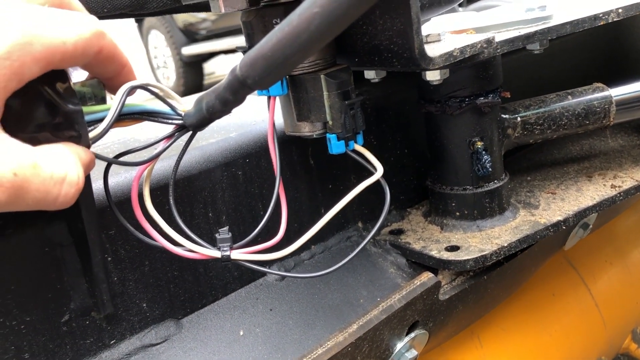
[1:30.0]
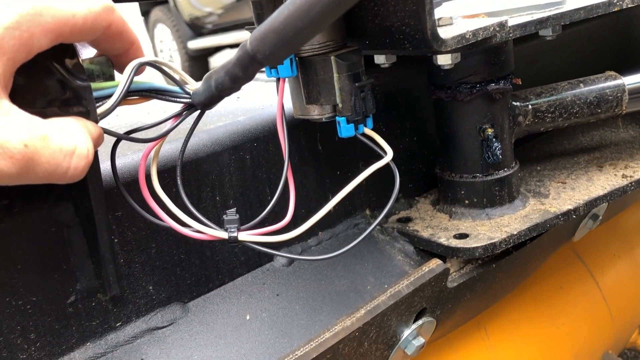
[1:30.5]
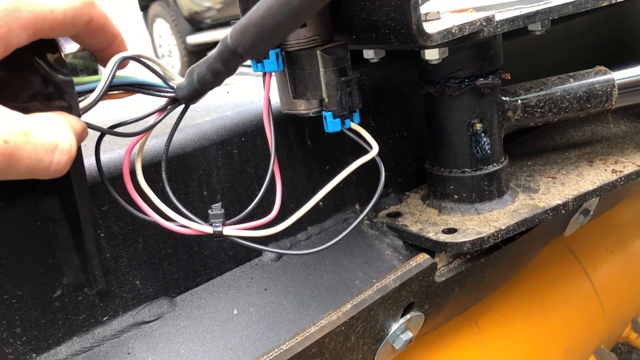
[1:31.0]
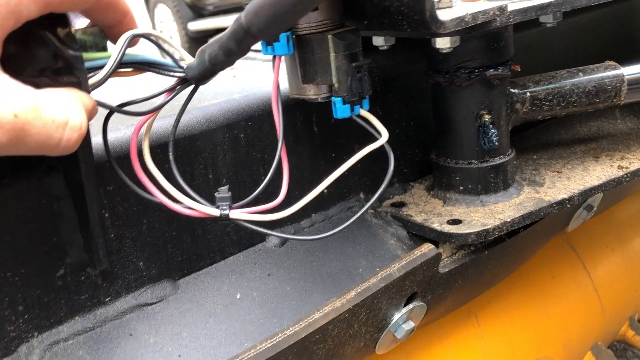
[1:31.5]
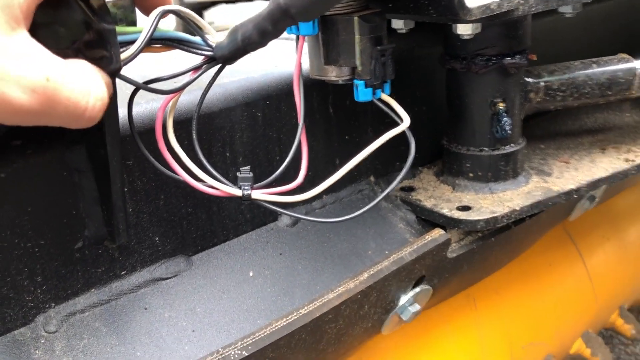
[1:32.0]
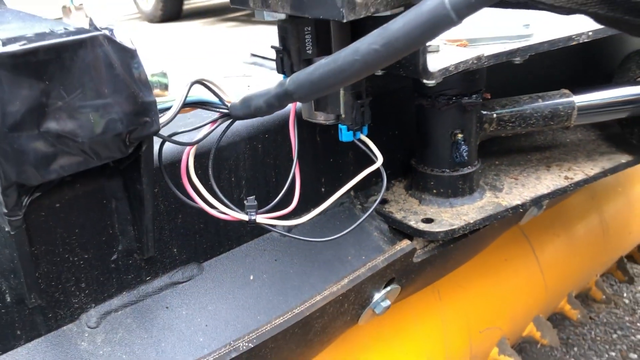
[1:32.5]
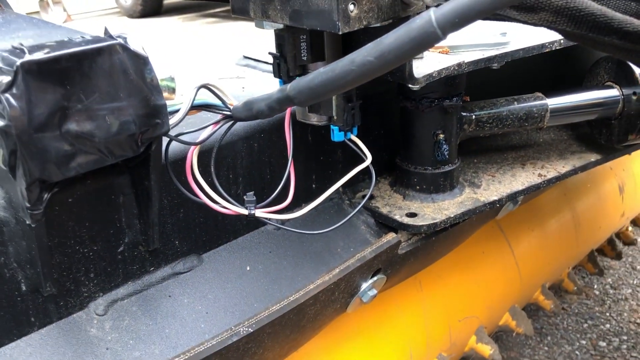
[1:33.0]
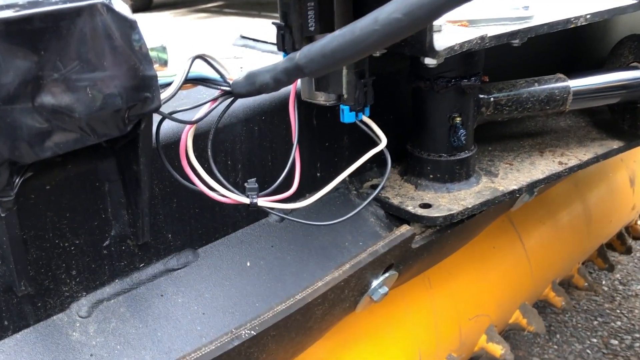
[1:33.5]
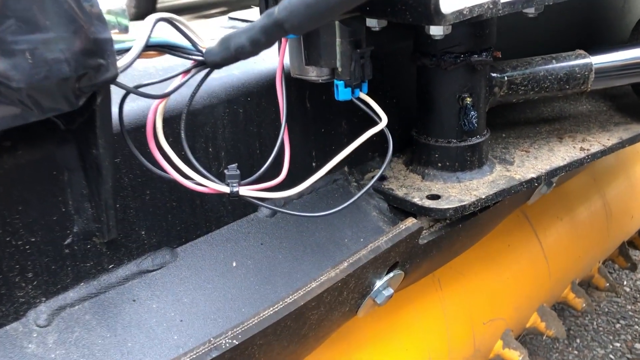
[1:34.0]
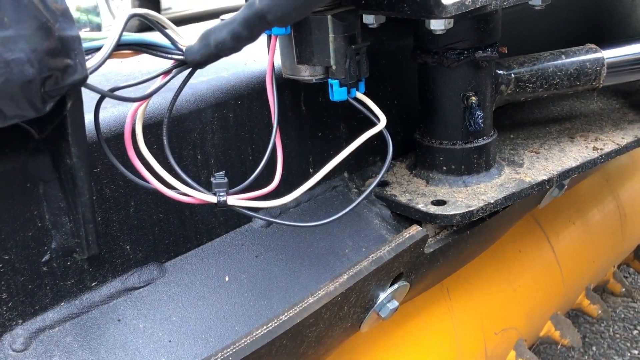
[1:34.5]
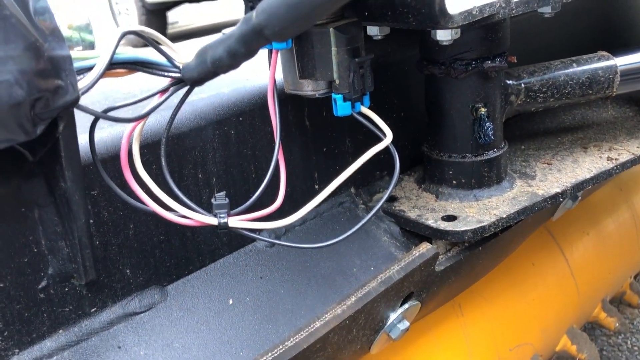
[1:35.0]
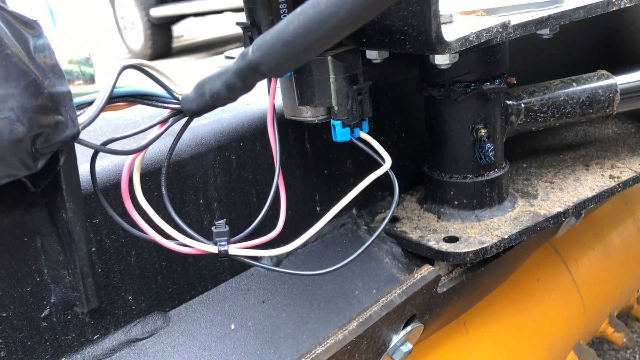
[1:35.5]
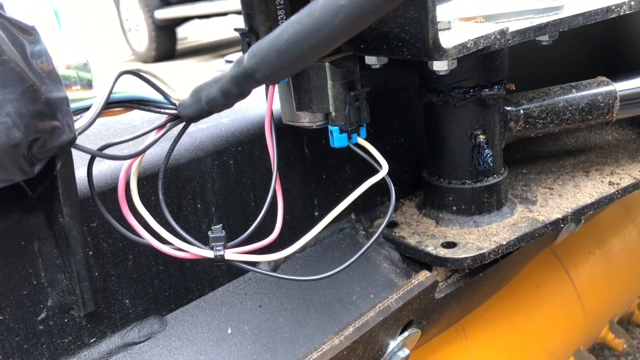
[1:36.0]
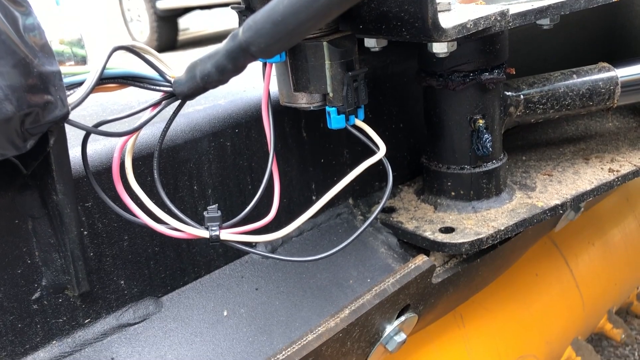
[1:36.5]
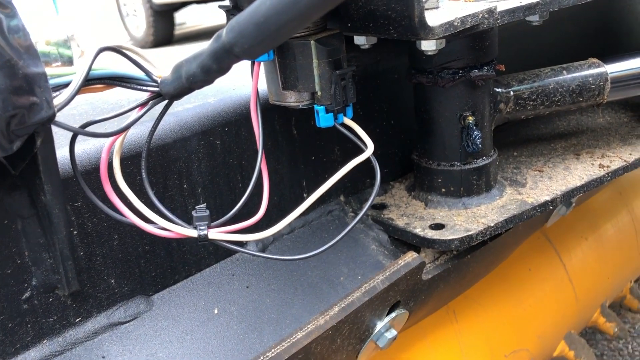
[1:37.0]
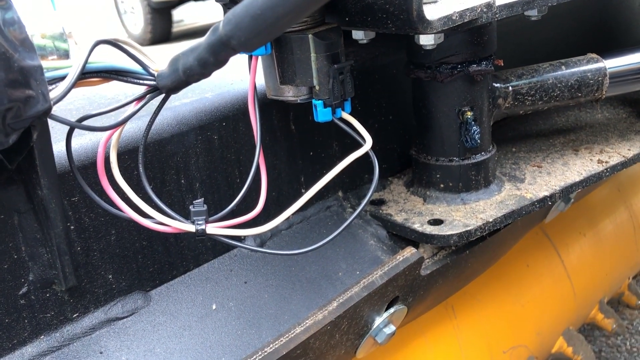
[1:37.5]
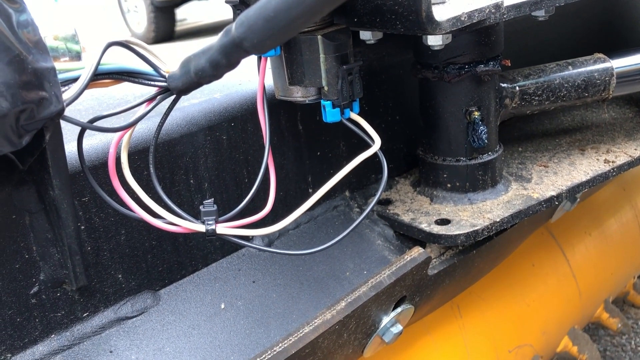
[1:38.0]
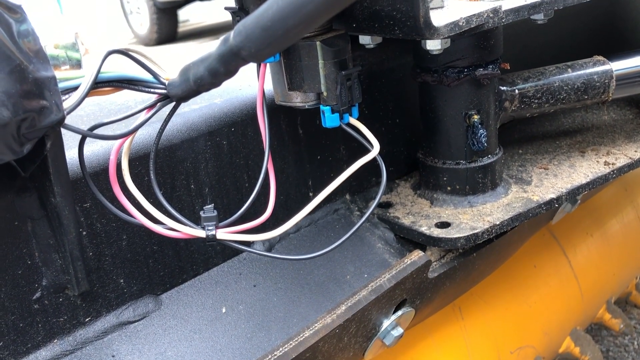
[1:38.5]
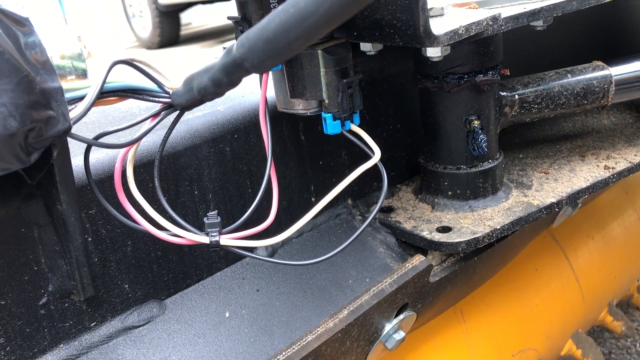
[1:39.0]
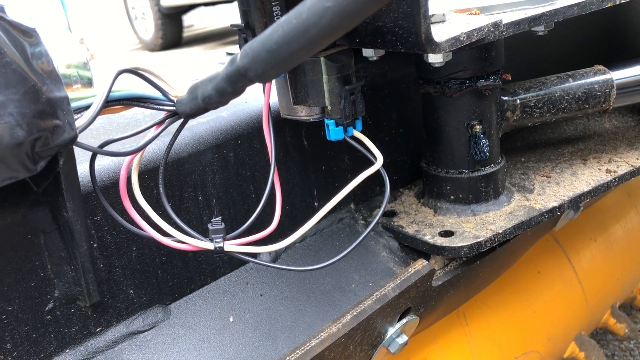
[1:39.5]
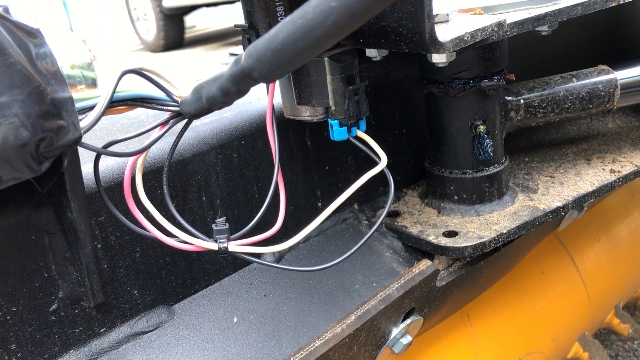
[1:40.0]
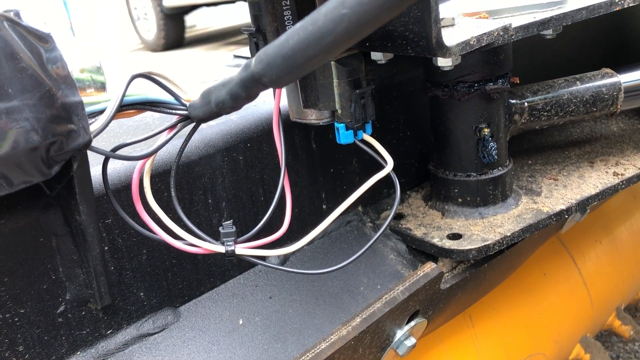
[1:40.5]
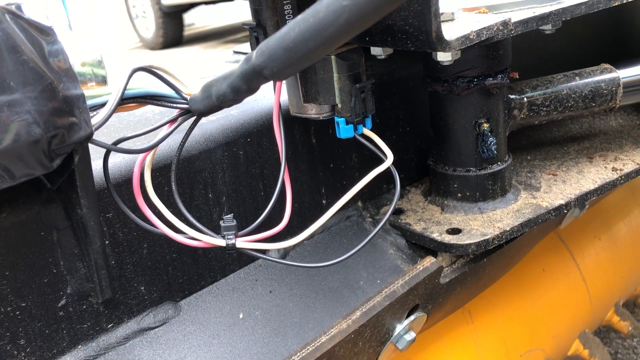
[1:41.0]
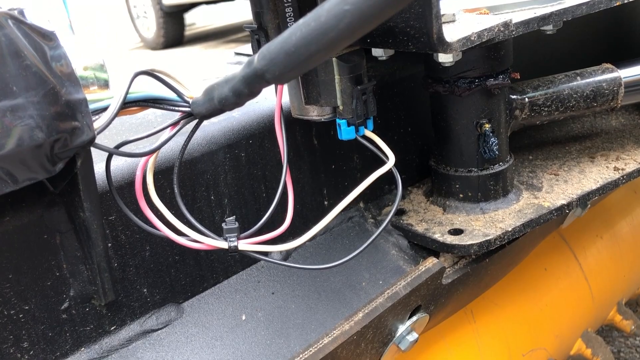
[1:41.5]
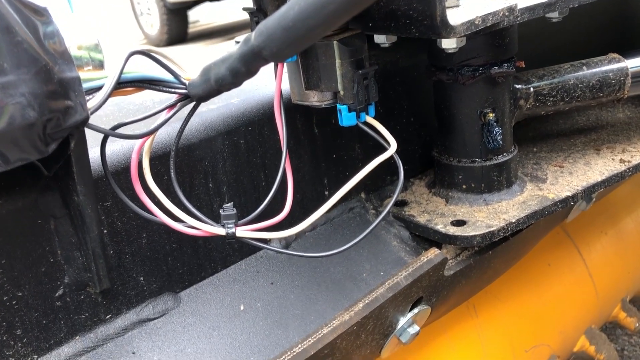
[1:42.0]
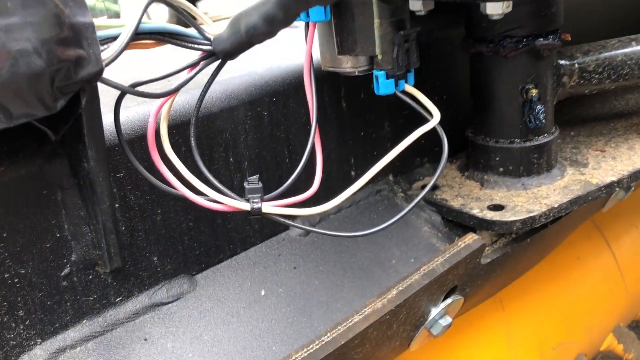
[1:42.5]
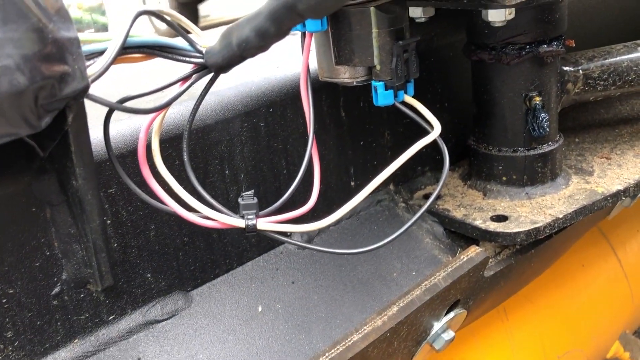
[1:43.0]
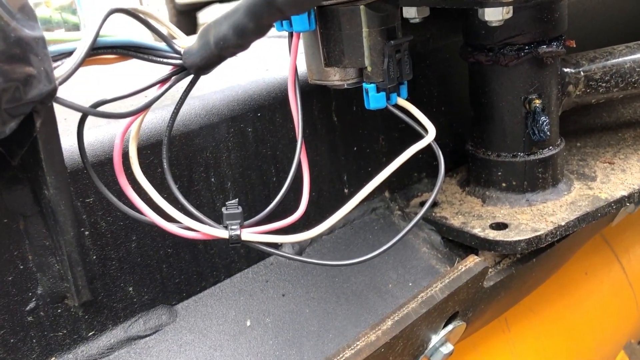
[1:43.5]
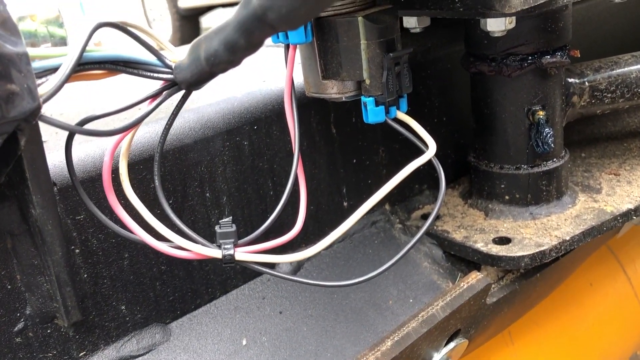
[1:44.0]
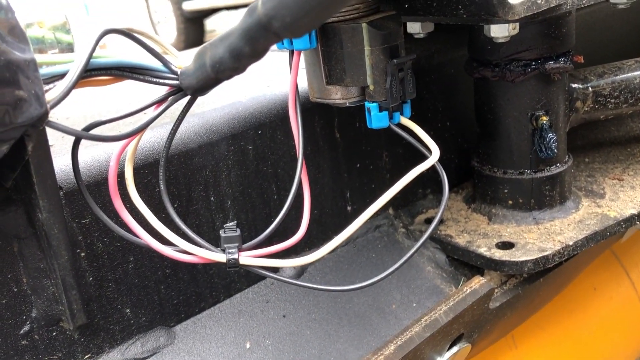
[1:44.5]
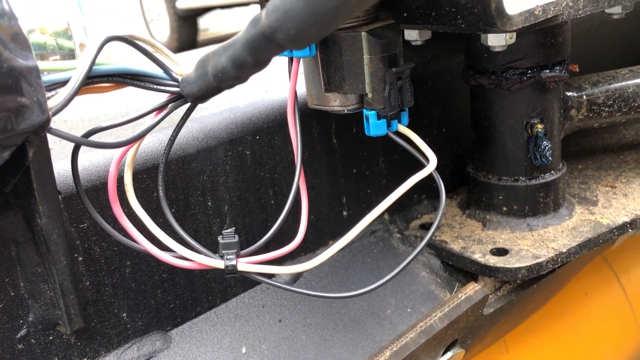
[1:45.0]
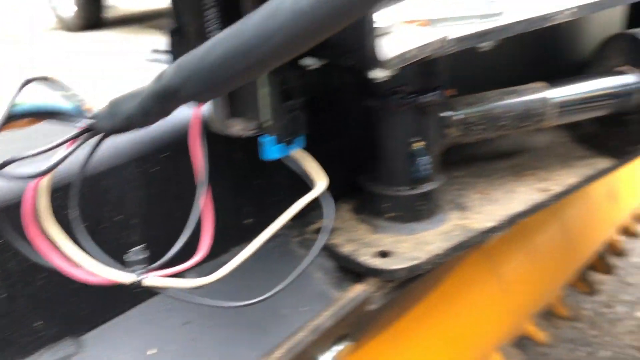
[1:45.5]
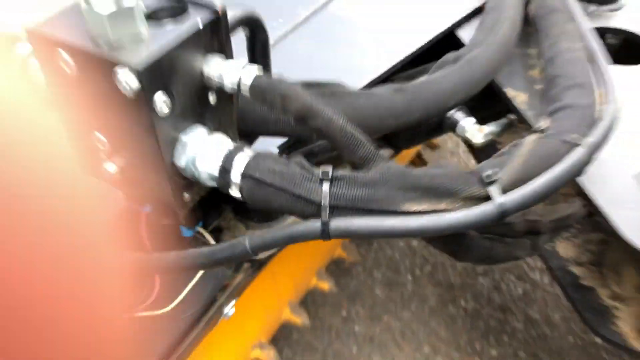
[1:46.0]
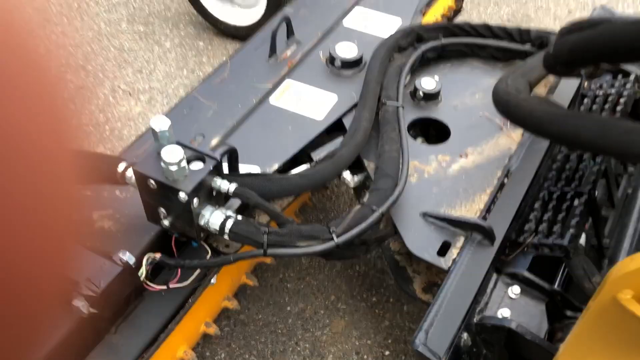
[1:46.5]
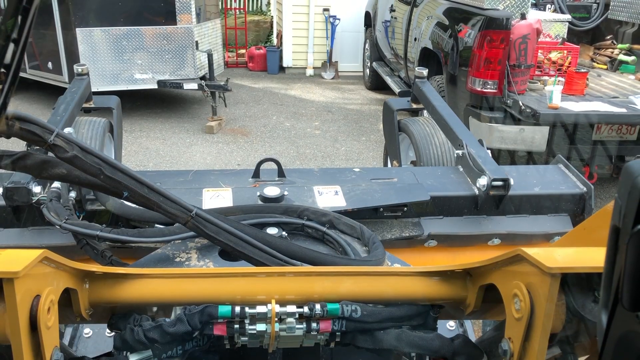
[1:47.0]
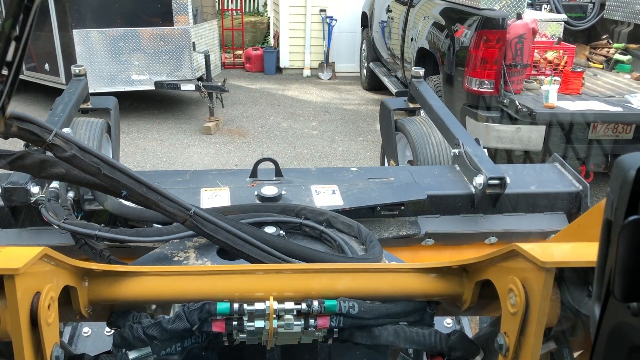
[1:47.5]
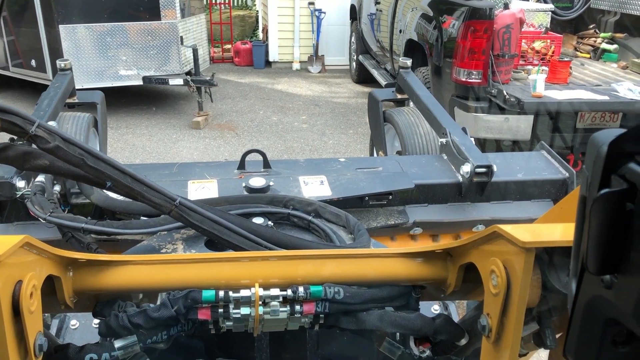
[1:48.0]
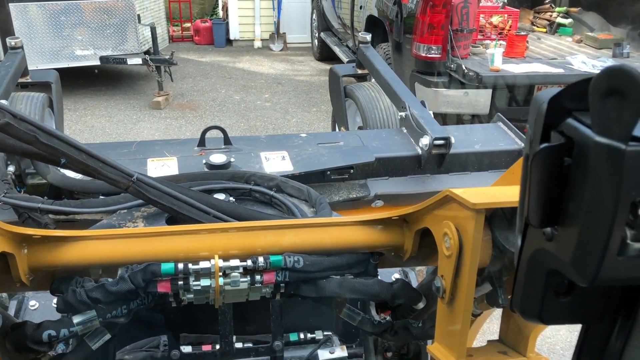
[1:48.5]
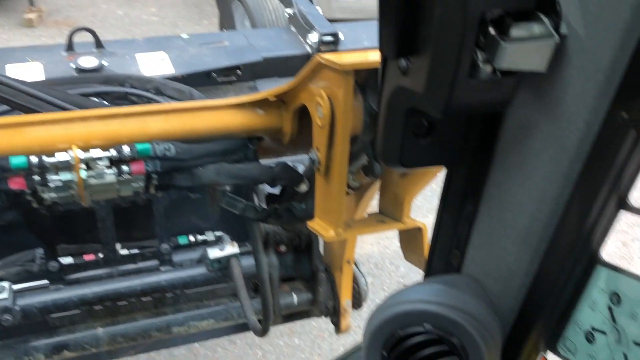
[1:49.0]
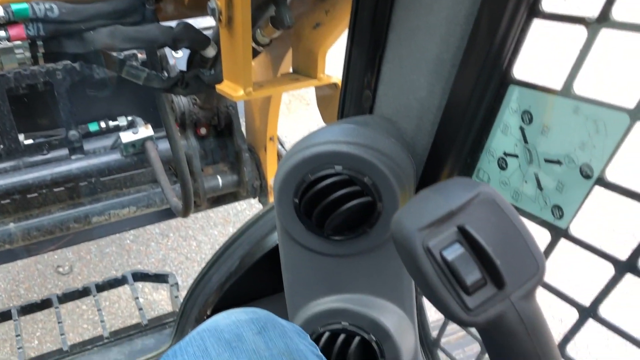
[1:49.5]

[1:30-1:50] The man looks at the cable wire, zooms in and examines it closely, checking for any fault, then zooms out to show the larger size of the equipment. He shows the machine's hand control system and controls the machine, moving it from one point to another. Many components of this mechanical instrument for vehicle repairs are highlighted by the camera, and the movement control unit is zoomed in. The place looks like a mechanical workshop where cars are repaired, apparently an expensive one, and the machine has some mechanical and some electrical parts.